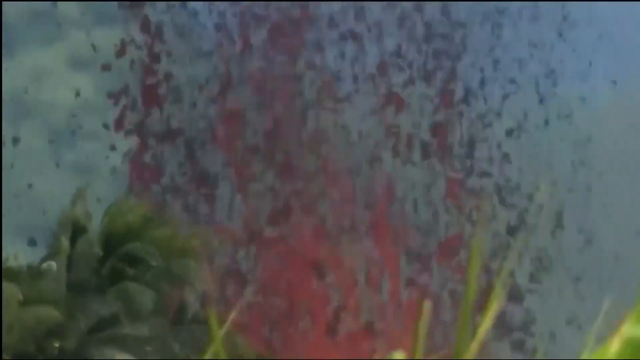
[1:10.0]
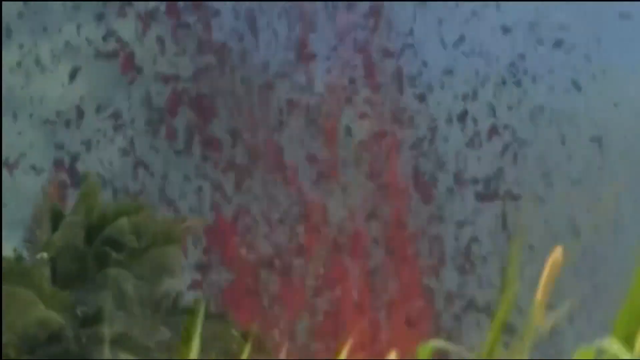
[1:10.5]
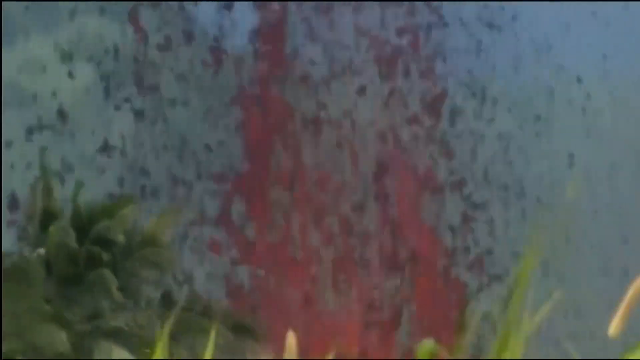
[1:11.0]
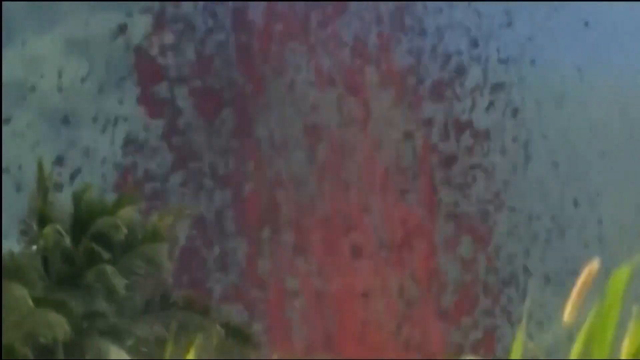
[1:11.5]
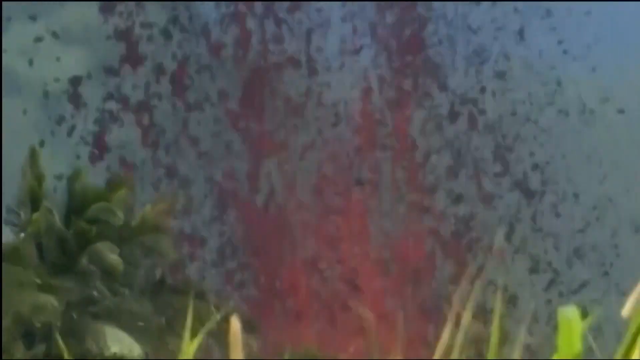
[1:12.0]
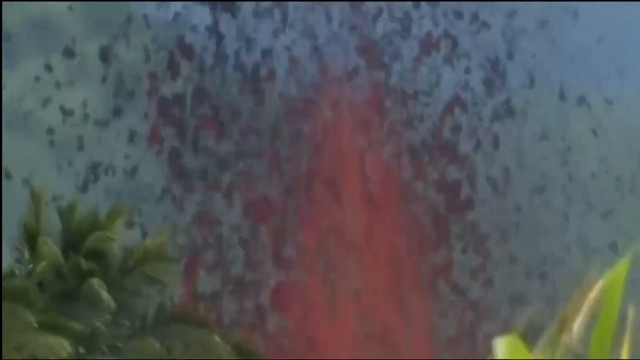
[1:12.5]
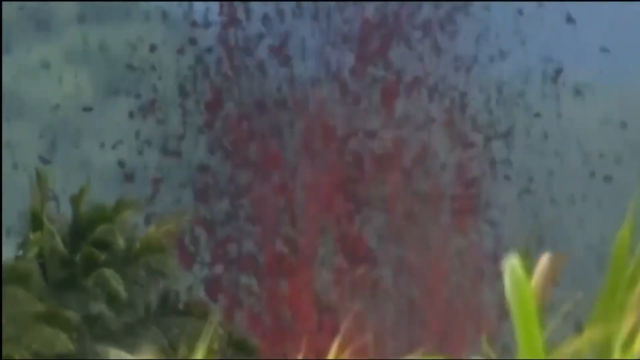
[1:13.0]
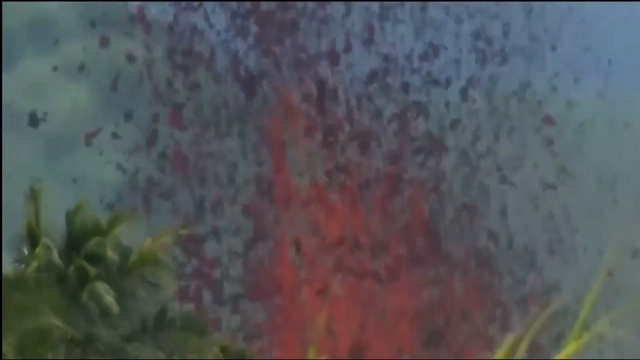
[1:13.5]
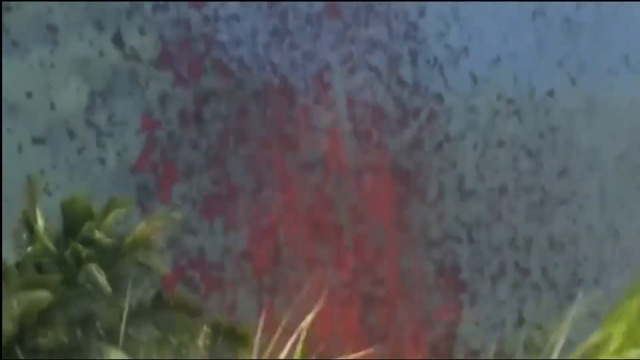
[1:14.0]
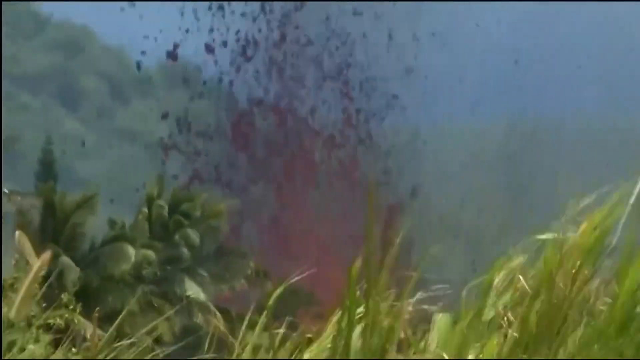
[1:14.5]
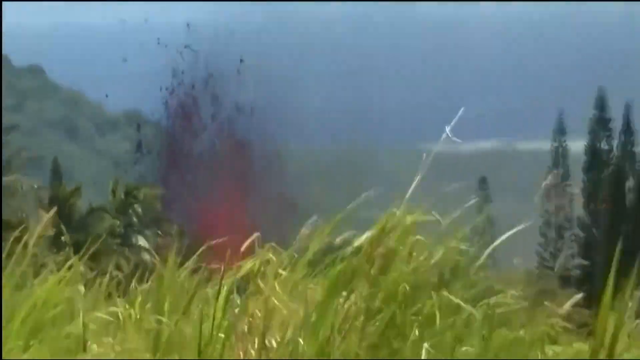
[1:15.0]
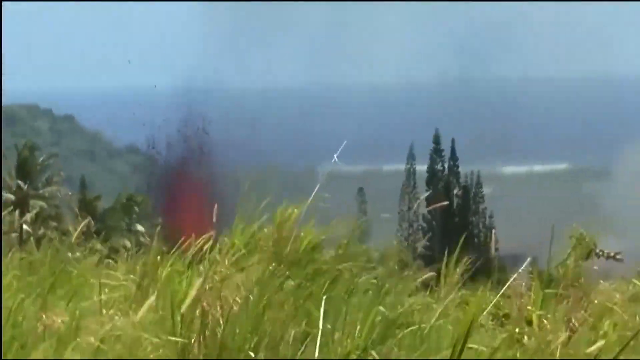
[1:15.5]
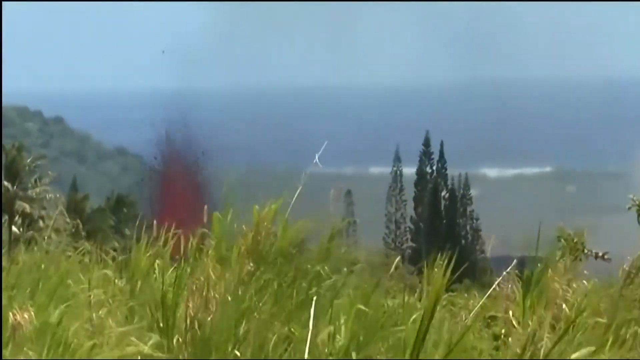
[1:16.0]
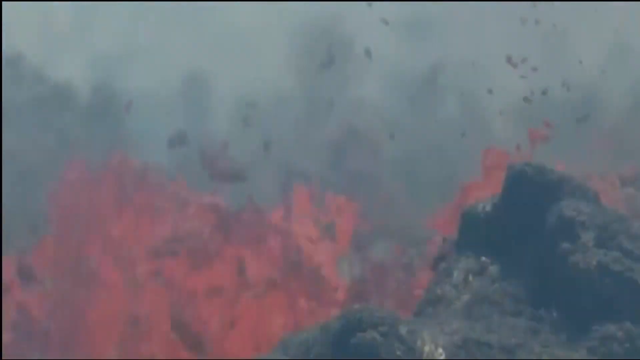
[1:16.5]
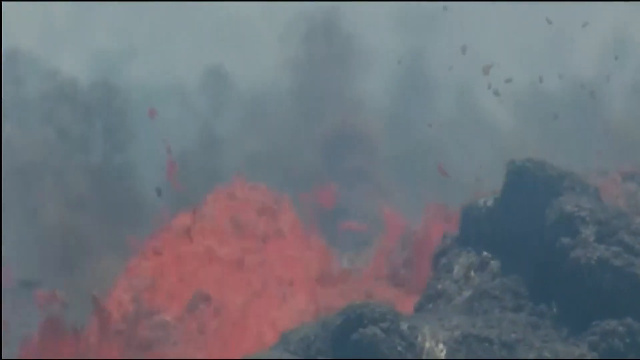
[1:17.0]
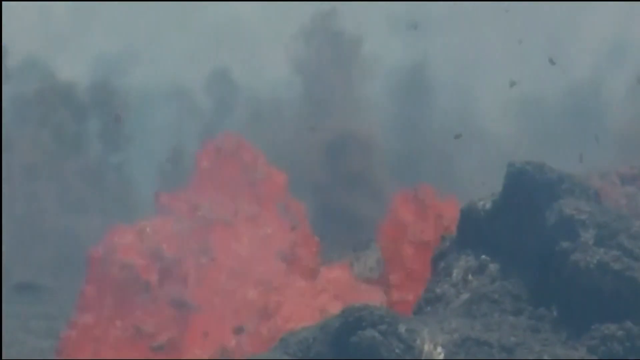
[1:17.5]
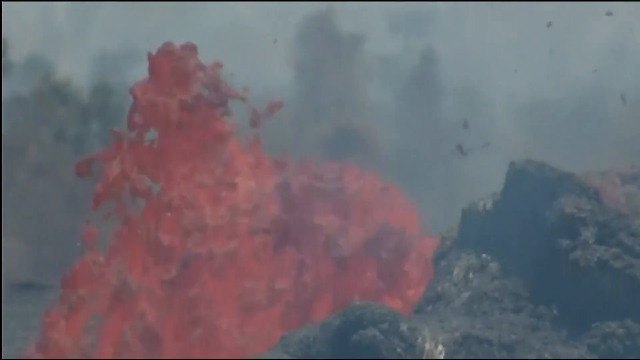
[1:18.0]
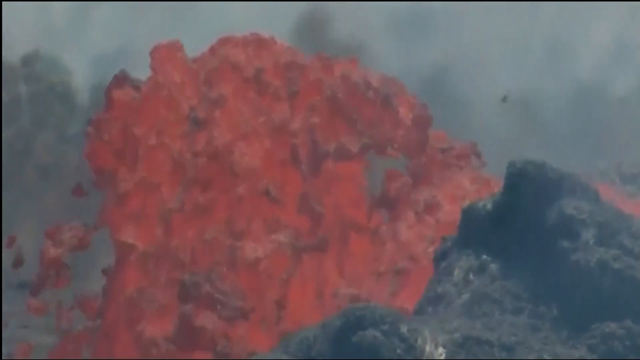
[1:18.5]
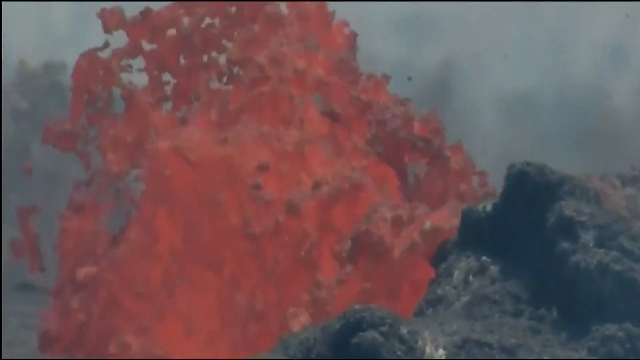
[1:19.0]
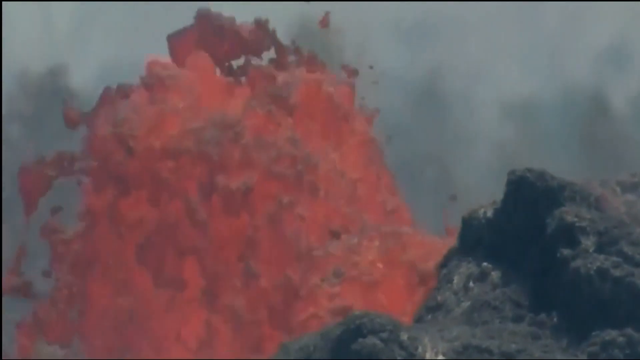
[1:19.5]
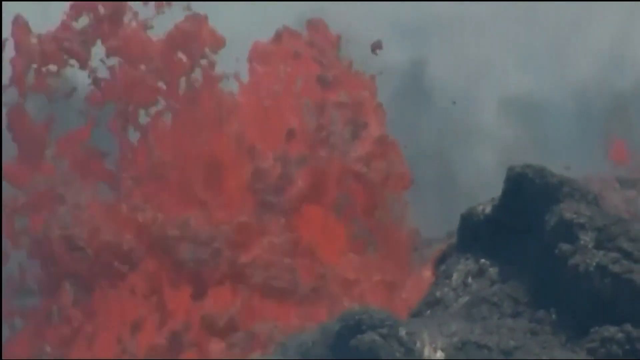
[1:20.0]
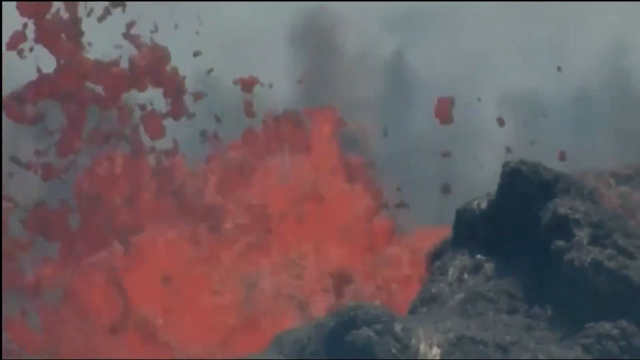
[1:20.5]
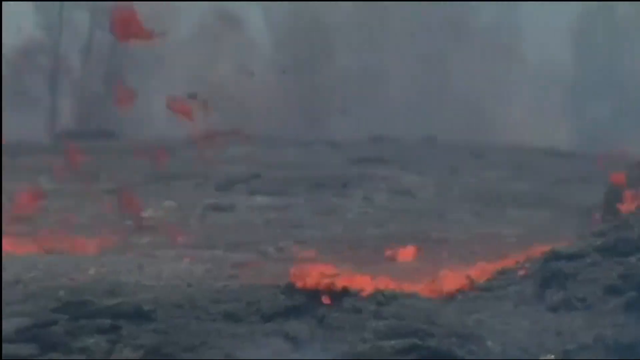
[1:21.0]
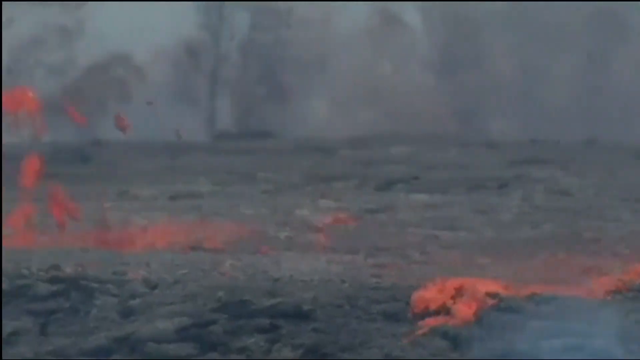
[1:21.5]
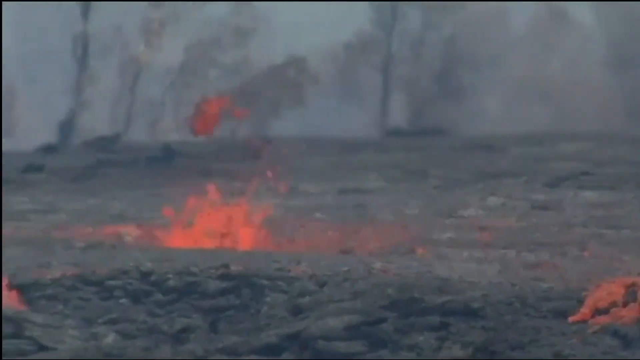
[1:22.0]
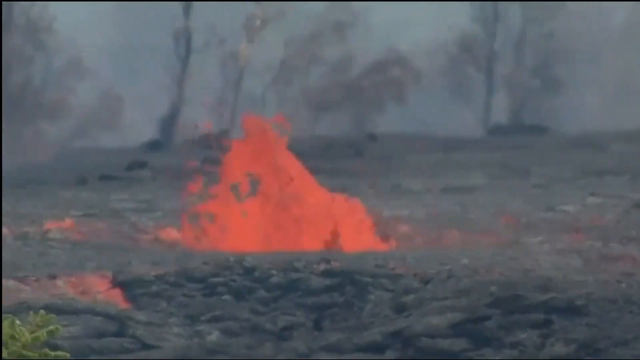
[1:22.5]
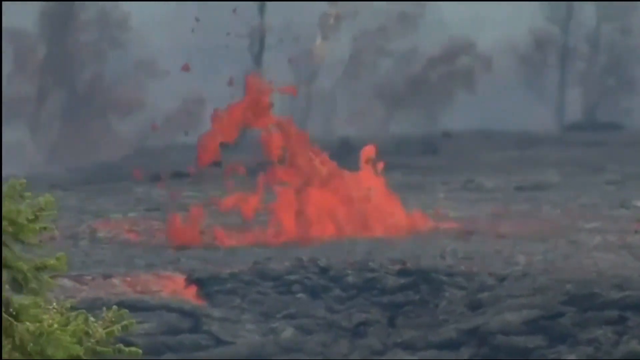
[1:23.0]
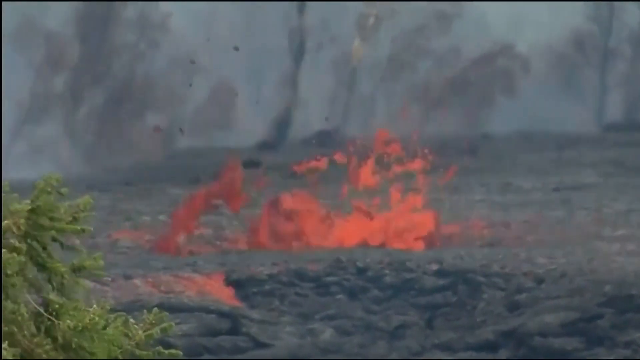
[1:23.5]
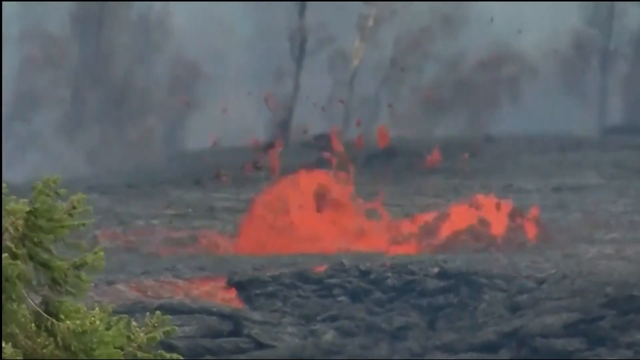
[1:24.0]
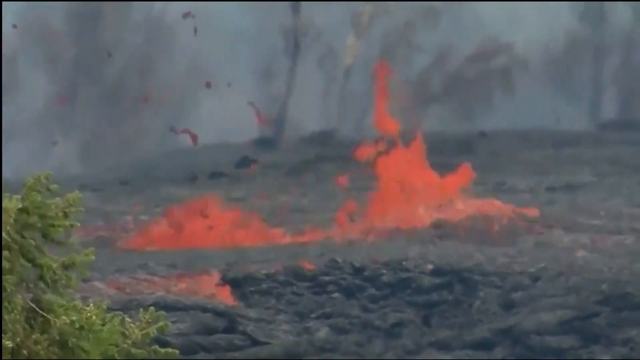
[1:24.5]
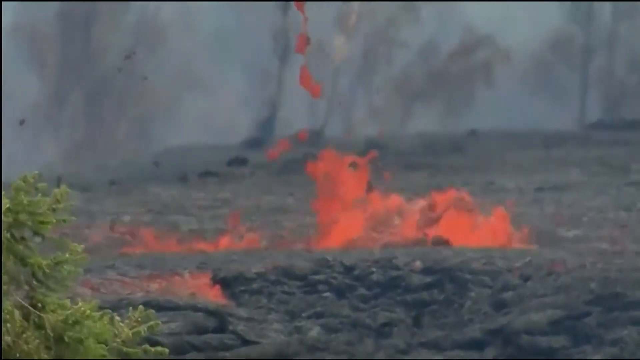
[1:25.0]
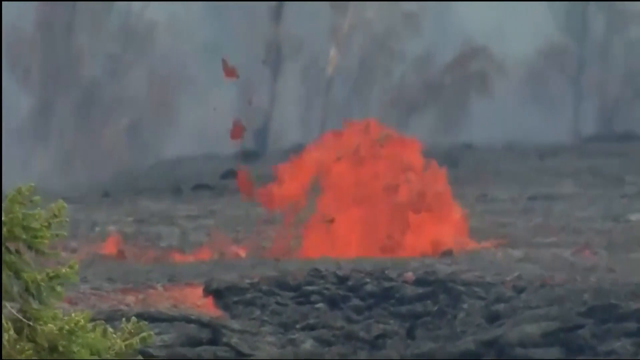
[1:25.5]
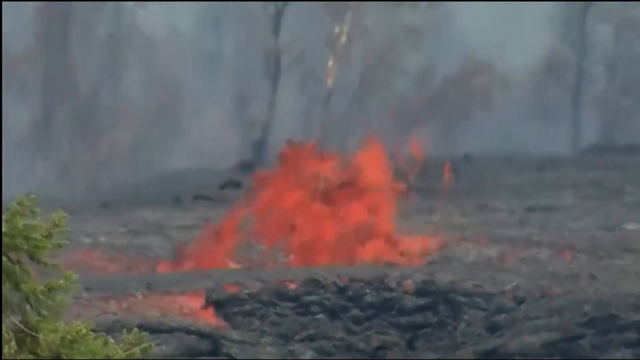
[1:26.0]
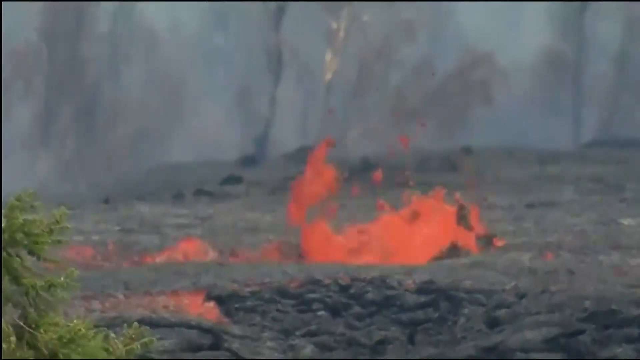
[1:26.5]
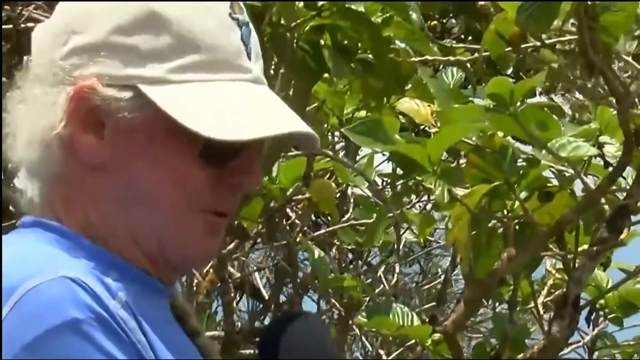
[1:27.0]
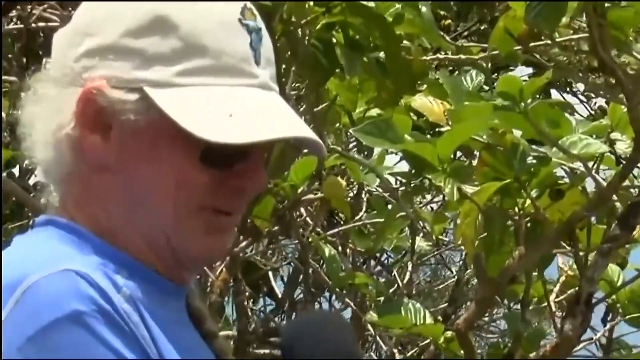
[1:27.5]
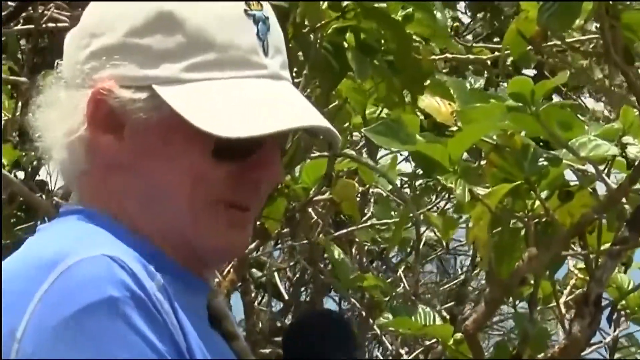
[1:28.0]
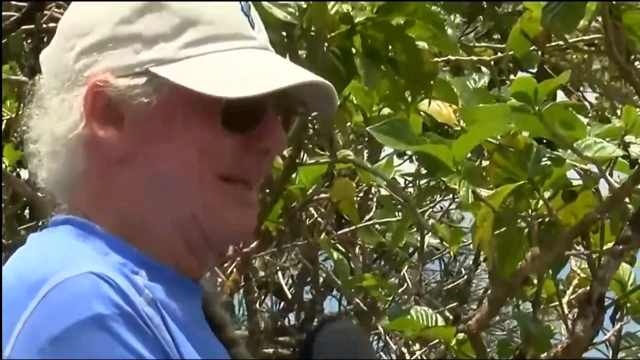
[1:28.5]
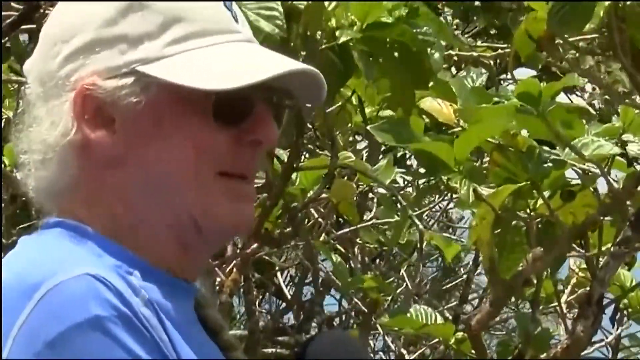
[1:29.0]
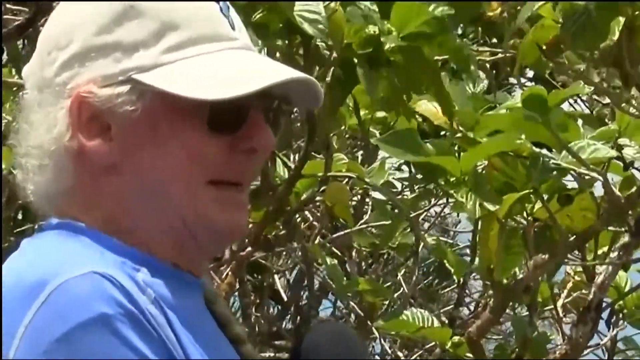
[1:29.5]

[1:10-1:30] Very up-close footage in landscape orientation shows a volcanic eruption, with red and orange lava spewing into the air and many little flakes of black ash and dust coming from the top of it. In the bottom left and right corners are some trees and green foliage, grass or bushes. The camera quickly zooms out to a farther view showing how high the eruption shoots. Then closer footage shows lava chaotically spraying everywhere over dirt and mud, bubbling up from the ground, as the camera pans toward the left. It cuts to an older gentleman on the left side of the screen with a light tan or white baseball cap, white hair, sunglasses and a blue shirt, standing in front of some trees with green leaves. He is talking to somebody who cannot be seen on camera and kind of shakes his head as if he can't believe it. The sky is gray with ash and smoke.